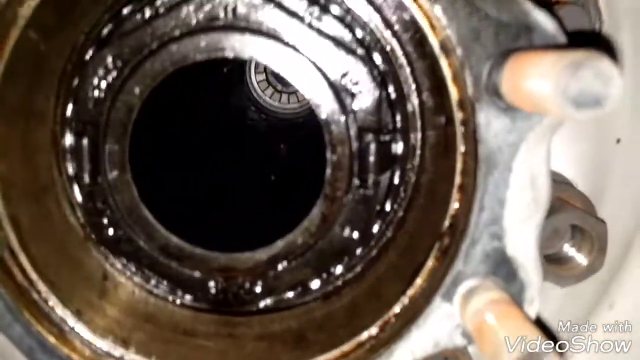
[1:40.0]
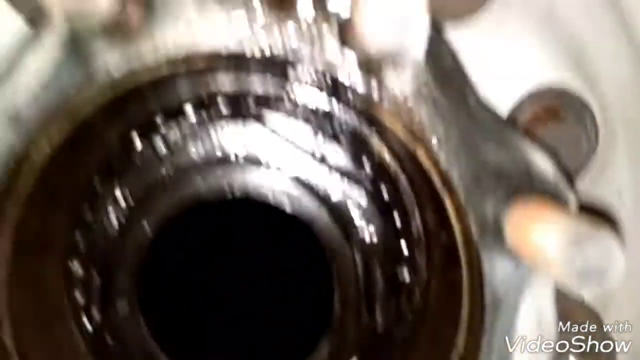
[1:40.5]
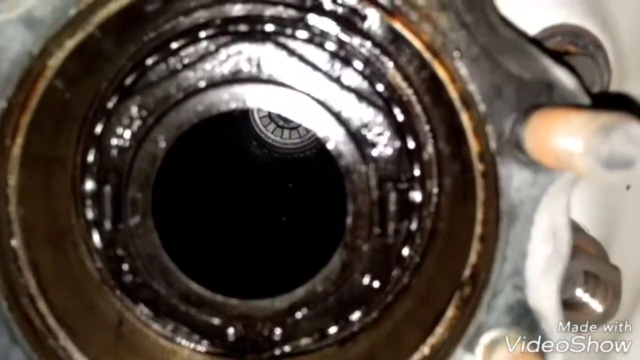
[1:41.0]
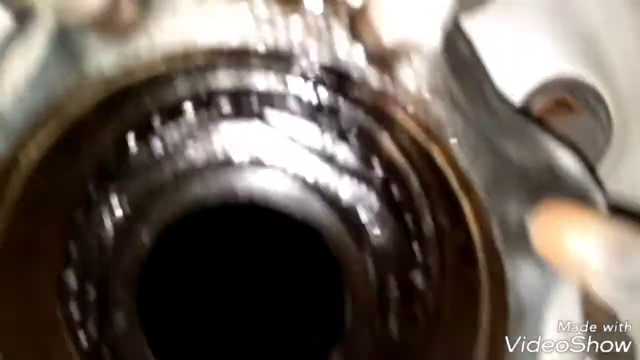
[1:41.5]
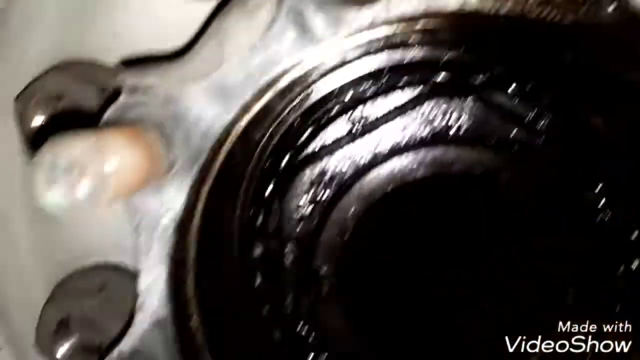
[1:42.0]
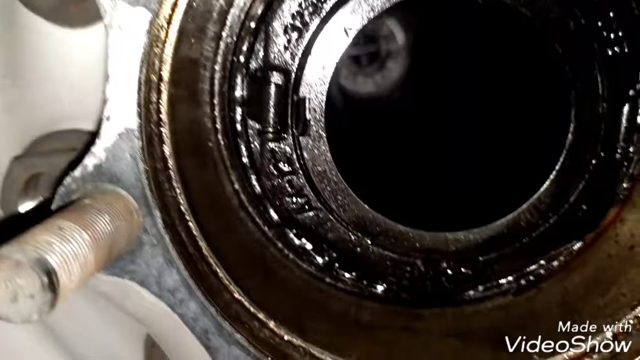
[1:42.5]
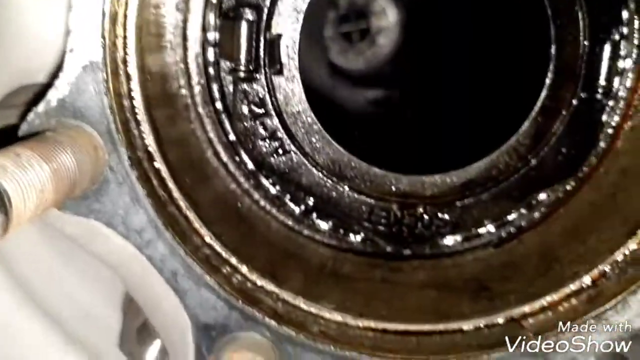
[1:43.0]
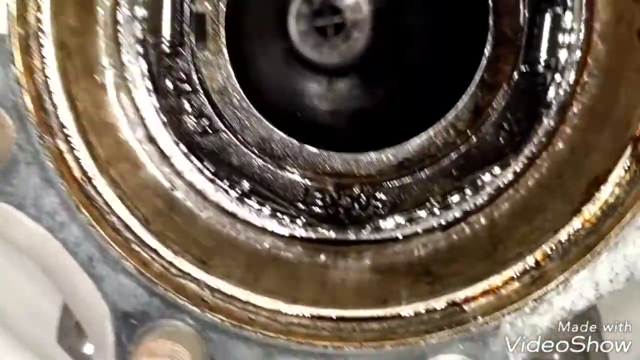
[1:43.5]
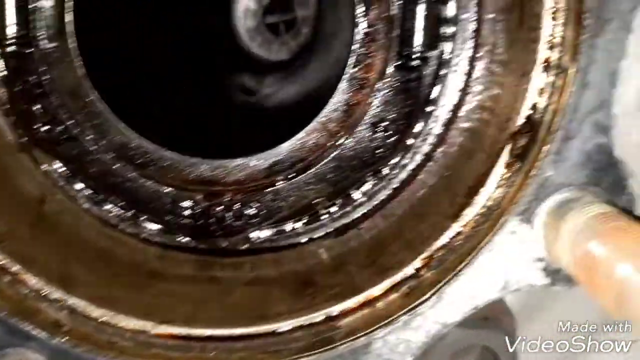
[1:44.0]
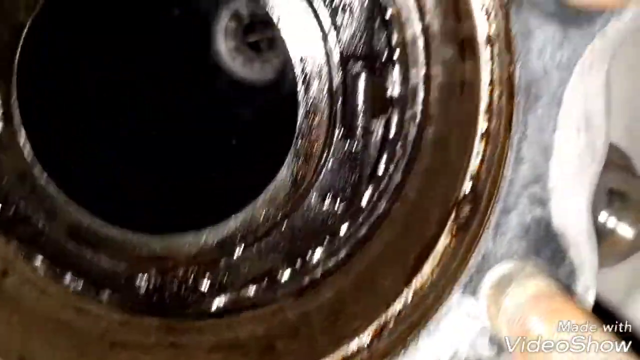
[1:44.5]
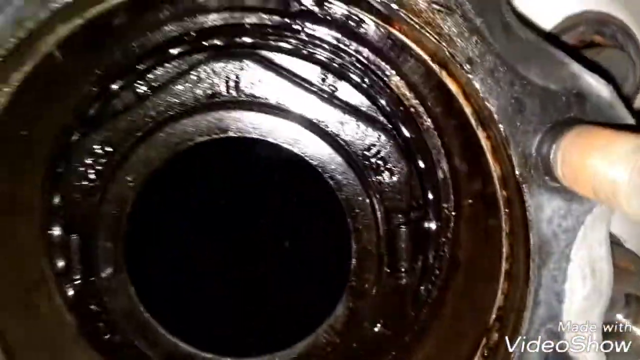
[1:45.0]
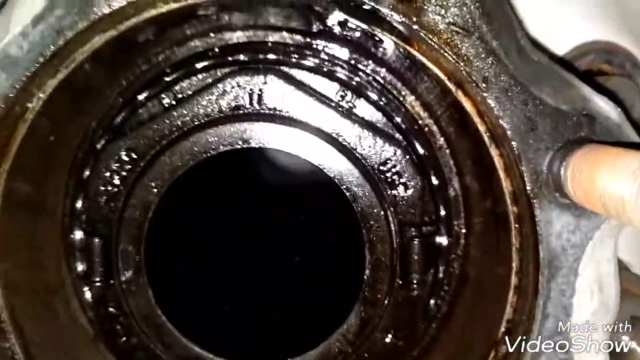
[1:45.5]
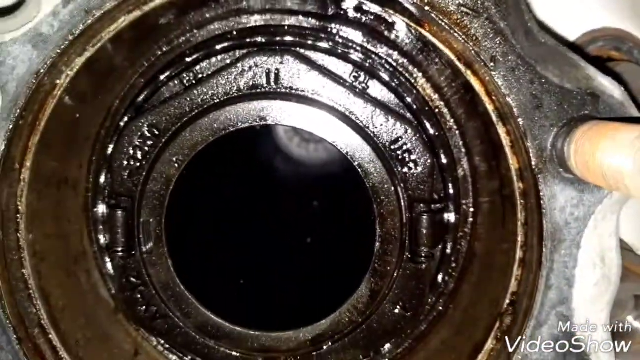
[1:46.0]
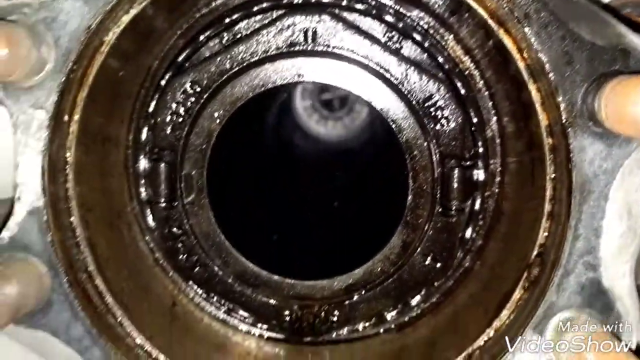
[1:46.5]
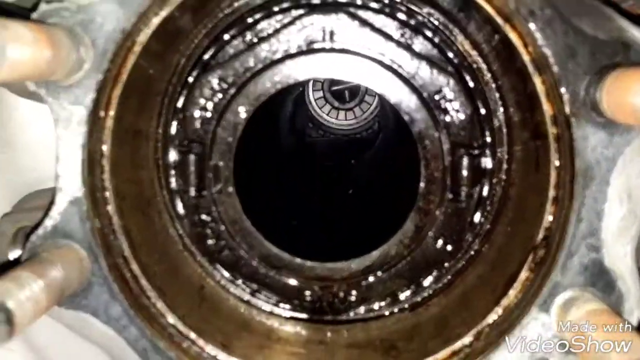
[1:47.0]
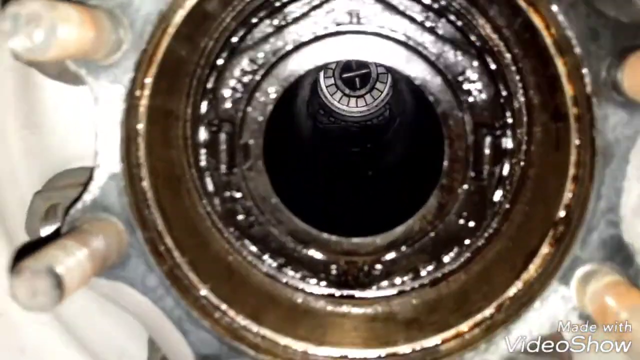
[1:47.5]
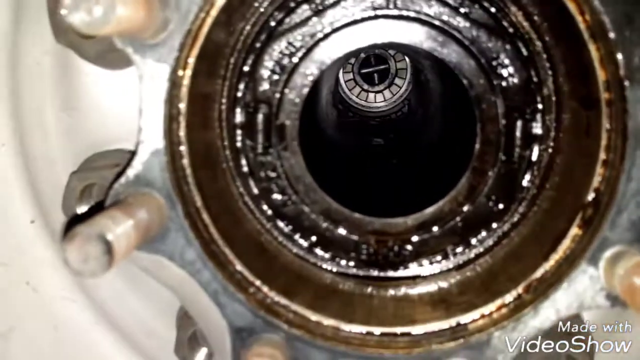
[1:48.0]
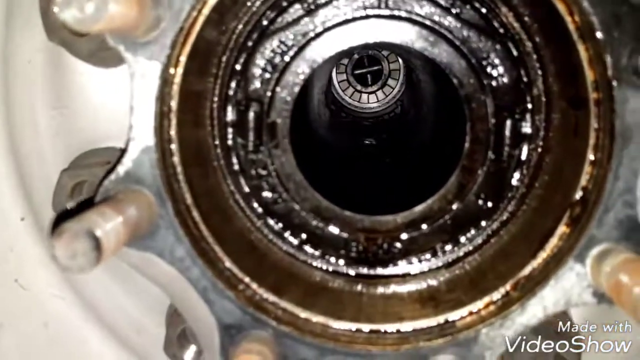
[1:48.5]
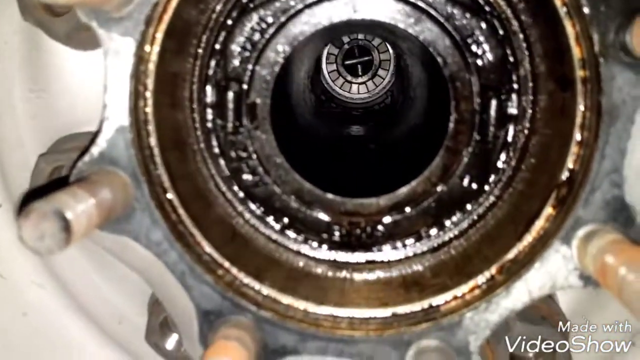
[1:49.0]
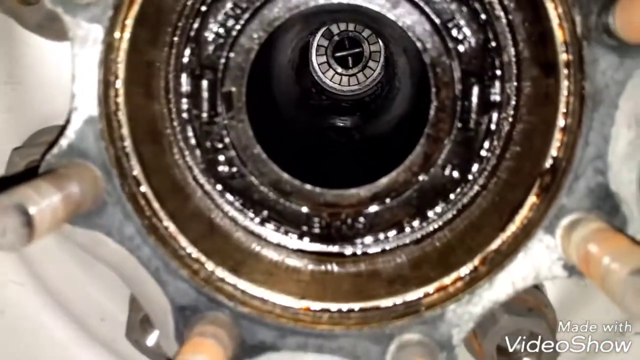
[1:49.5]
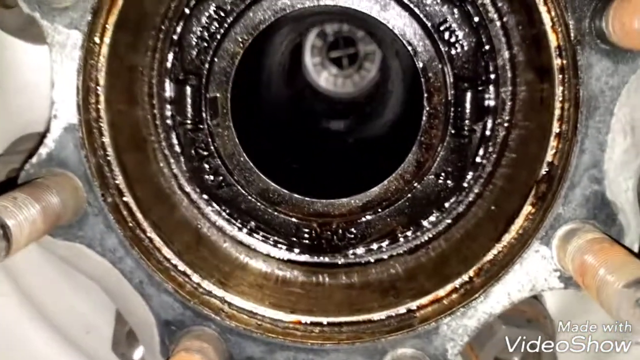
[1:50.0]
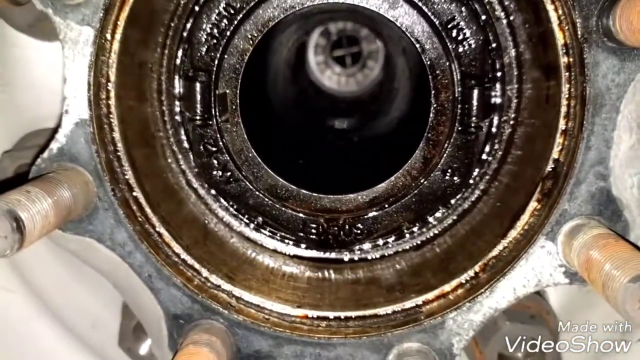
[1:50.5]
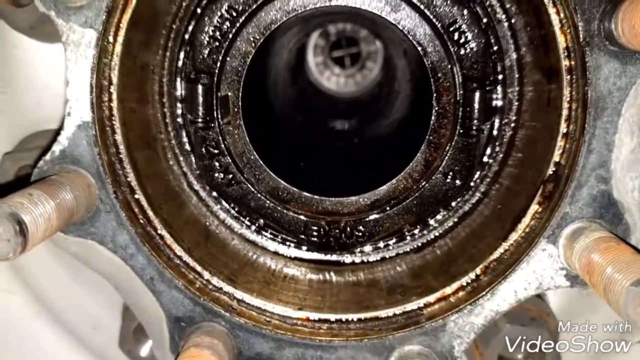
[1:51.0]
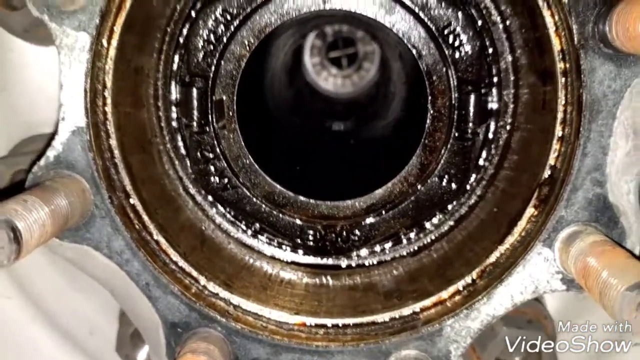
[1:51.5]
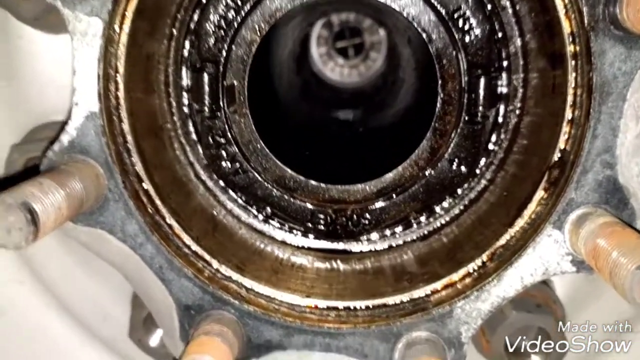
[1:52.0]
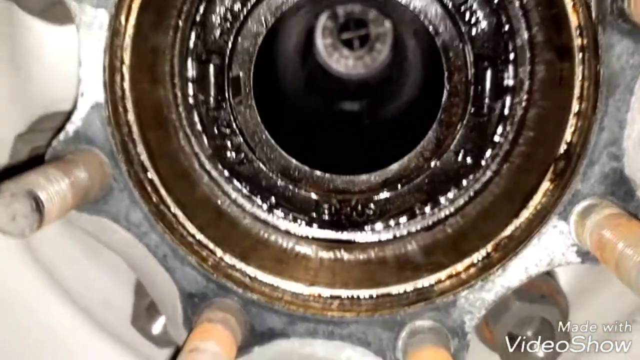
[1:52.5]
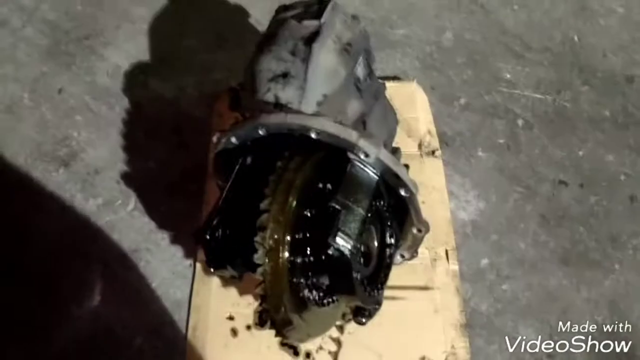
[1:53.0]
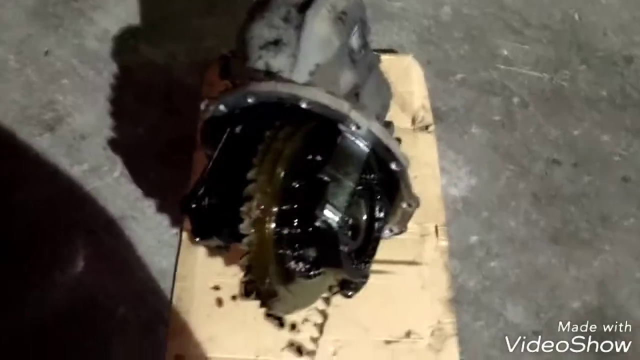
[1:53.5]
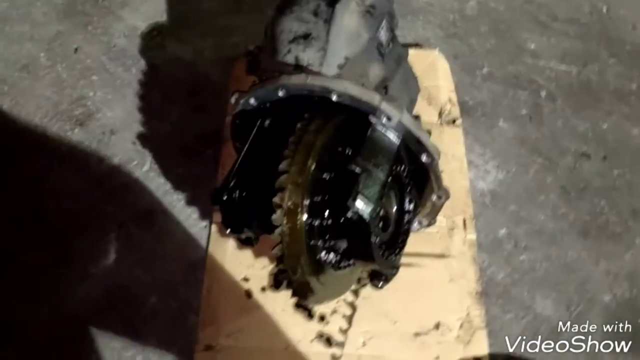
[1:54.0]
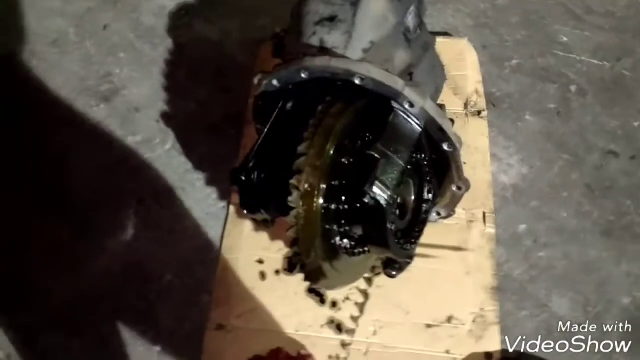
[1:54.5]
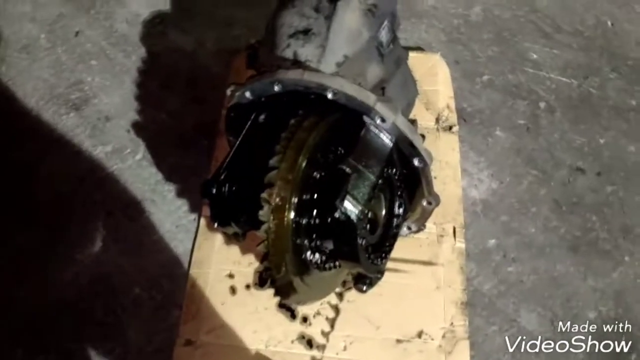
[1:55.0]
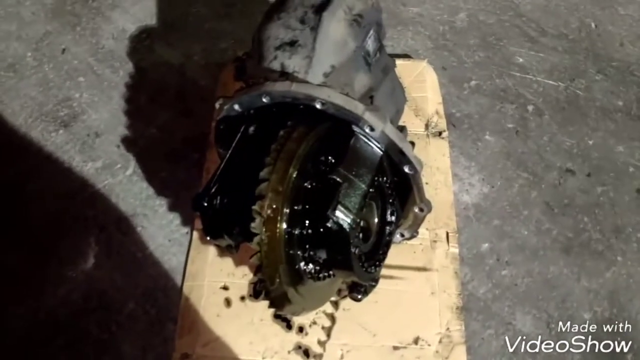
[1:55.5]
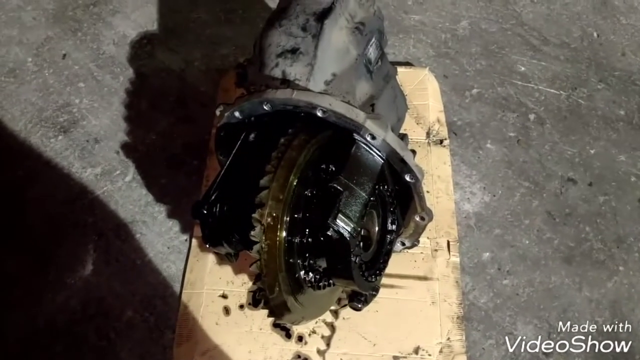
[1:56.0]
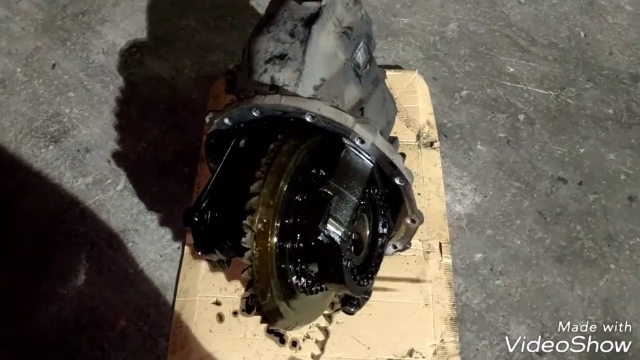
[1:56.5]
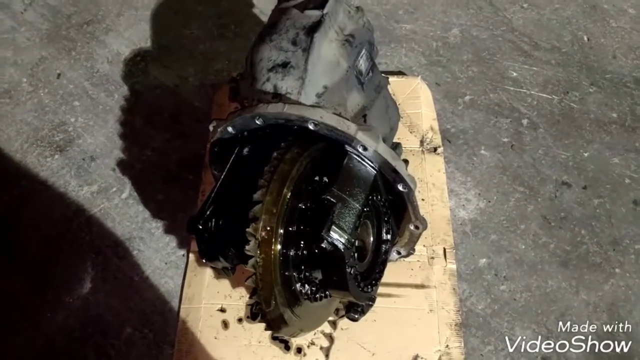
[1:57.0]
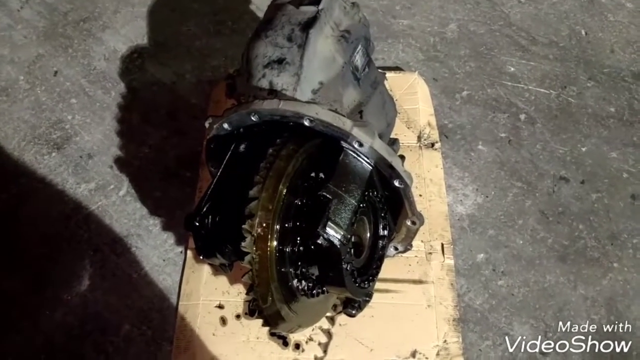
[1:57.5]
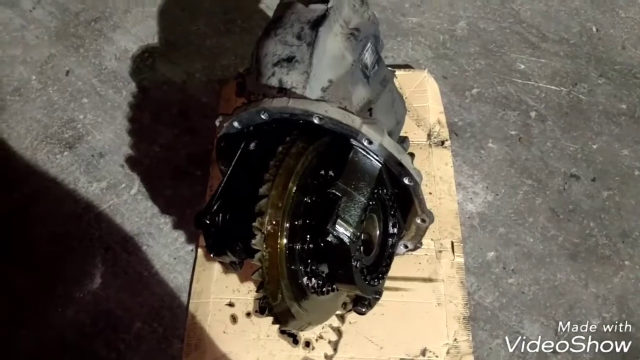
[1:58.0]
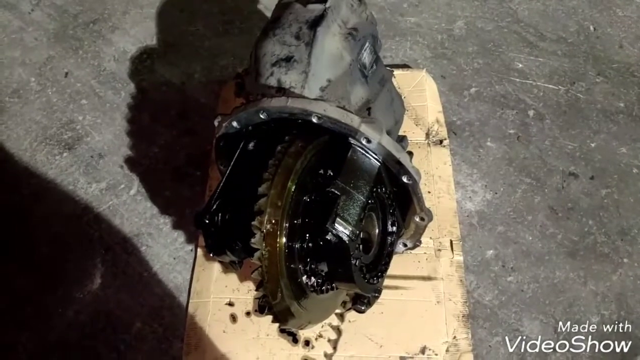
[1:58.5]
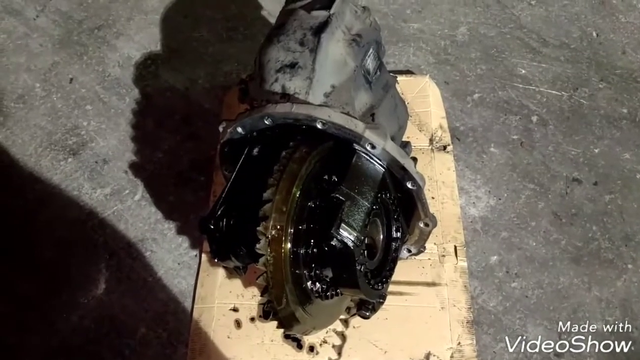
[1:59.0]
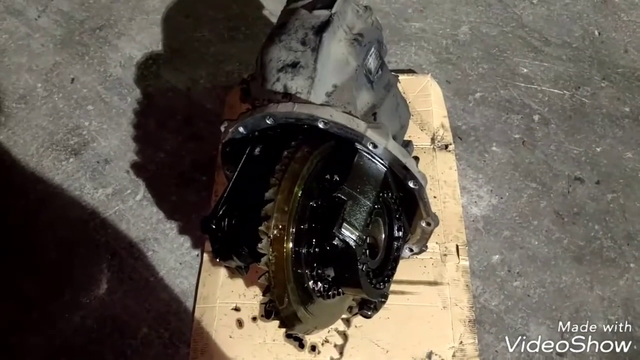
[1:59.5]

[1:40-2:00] The words "made with video show" appear in the bottom right corner. The view looks through a hole in the face of an iron piece, with bolts protruding out toward the camera. Close up, the hole in its middle shows through to another end, which is also oily; it is a piece of automotive mechanics. The view then moves to the outside, showing the cast iron body, which appears sort of grayish, and moving parts. It is sitting on a piece of cardboard on a concrete slab, and black oil inside it is dripping onto the cardboard. The edge of a wheel points toward the camera; the wheel has teeth, and it is mostly black inside.